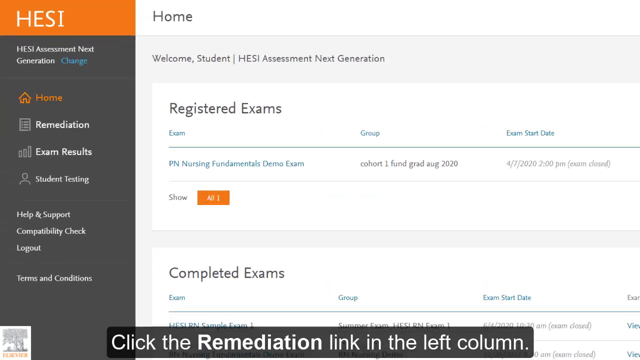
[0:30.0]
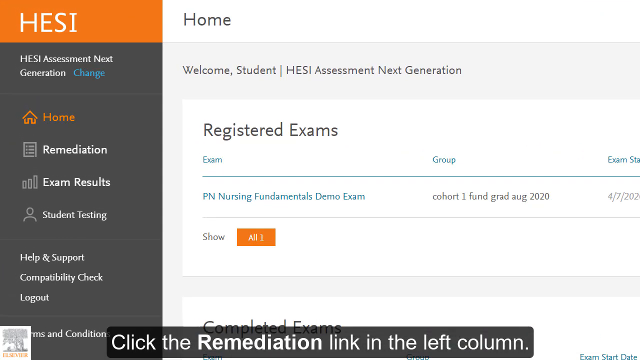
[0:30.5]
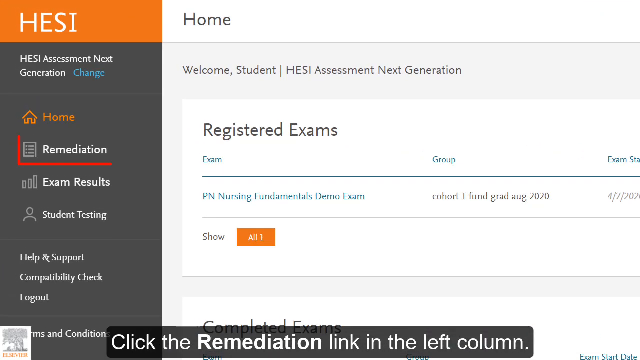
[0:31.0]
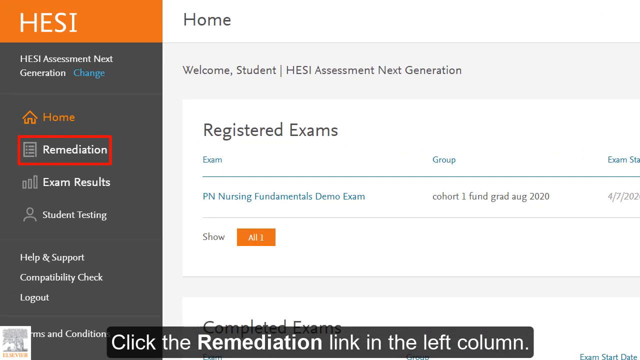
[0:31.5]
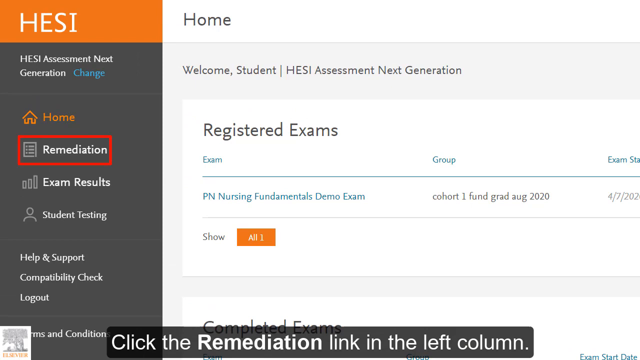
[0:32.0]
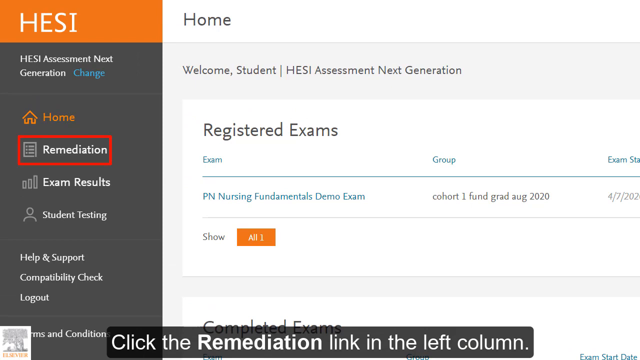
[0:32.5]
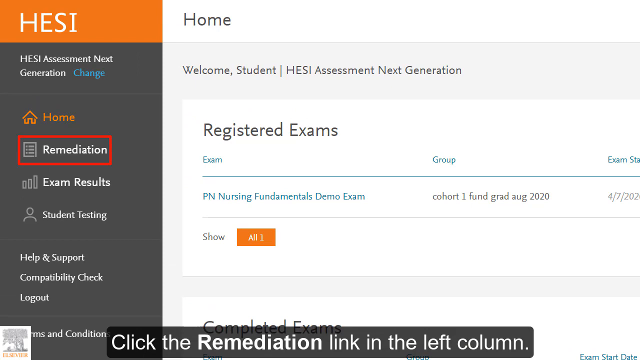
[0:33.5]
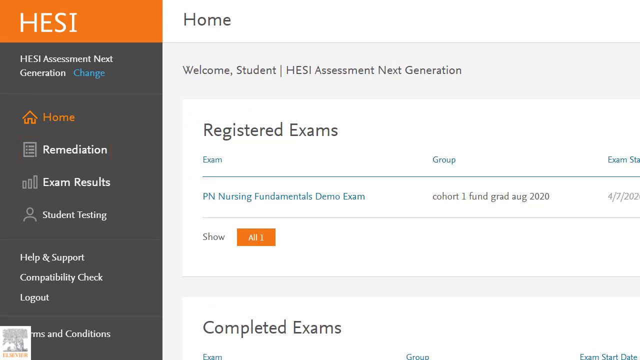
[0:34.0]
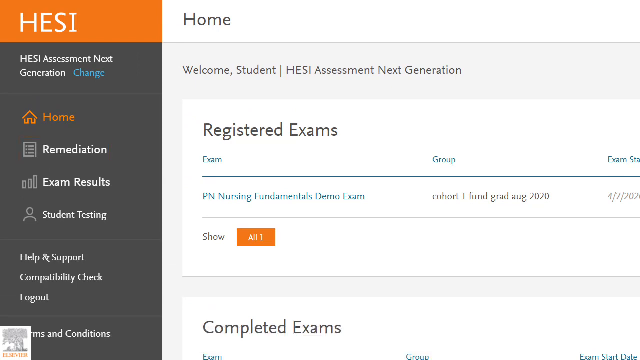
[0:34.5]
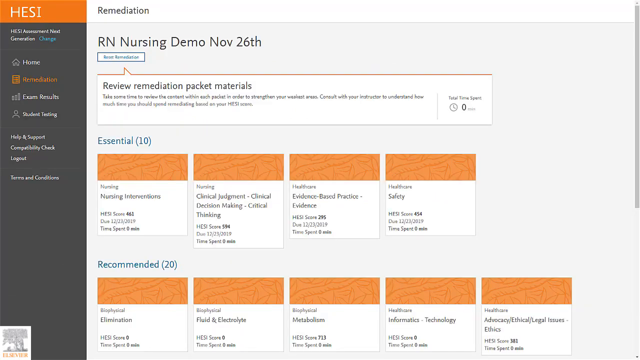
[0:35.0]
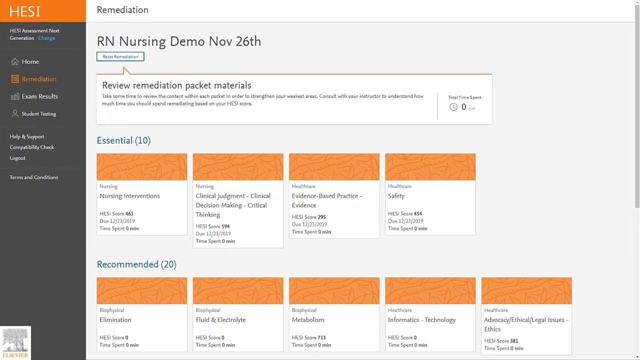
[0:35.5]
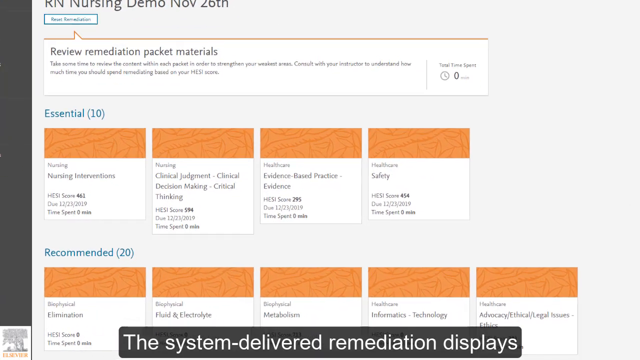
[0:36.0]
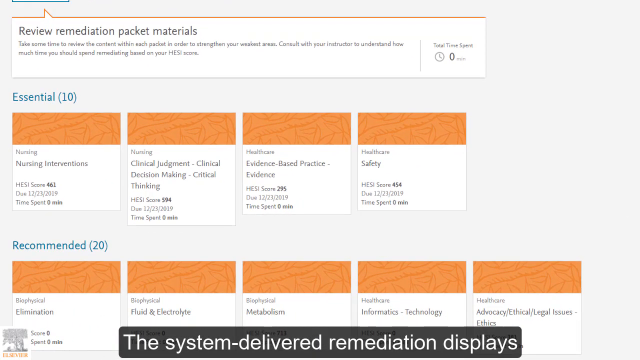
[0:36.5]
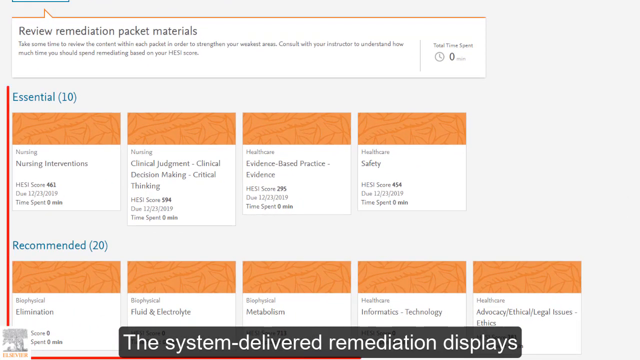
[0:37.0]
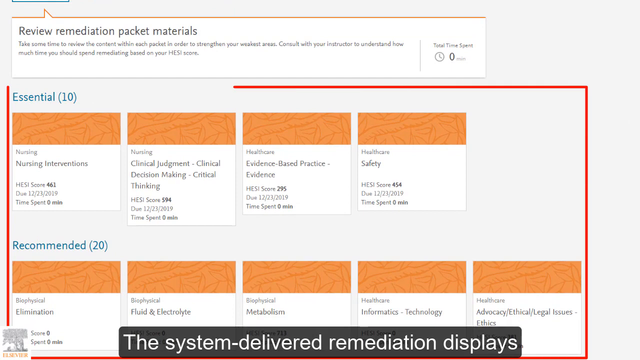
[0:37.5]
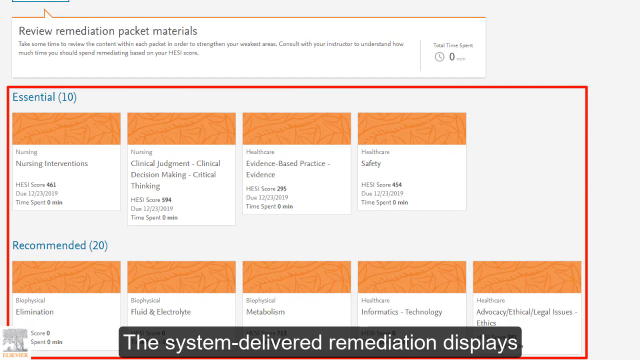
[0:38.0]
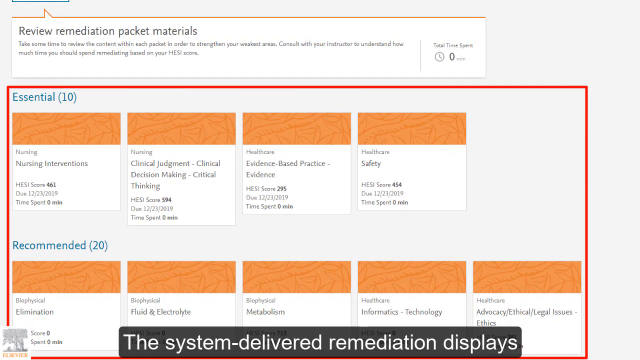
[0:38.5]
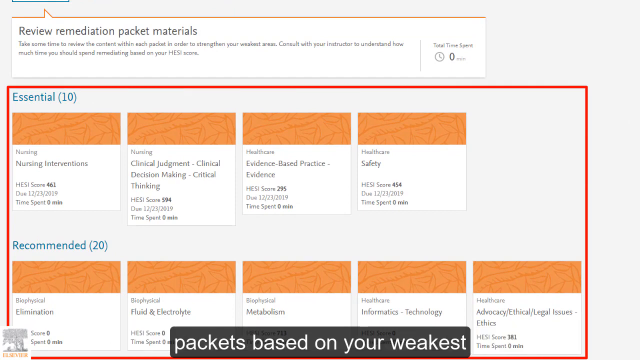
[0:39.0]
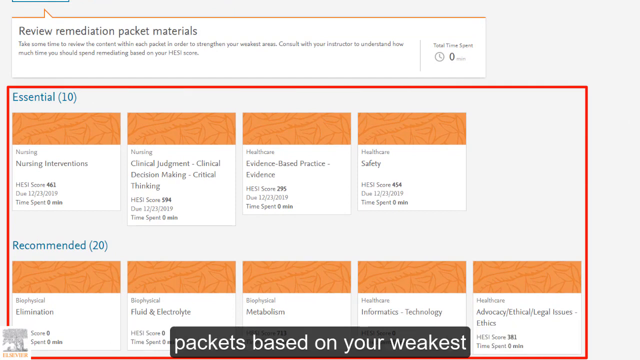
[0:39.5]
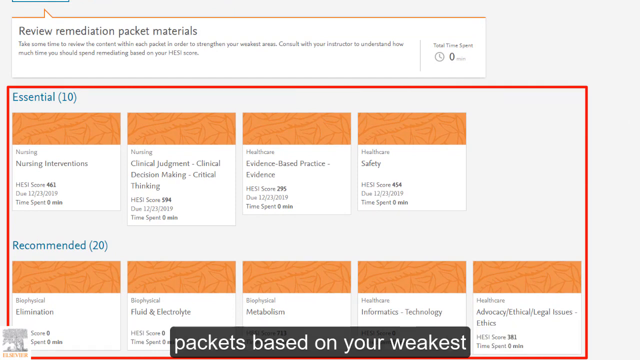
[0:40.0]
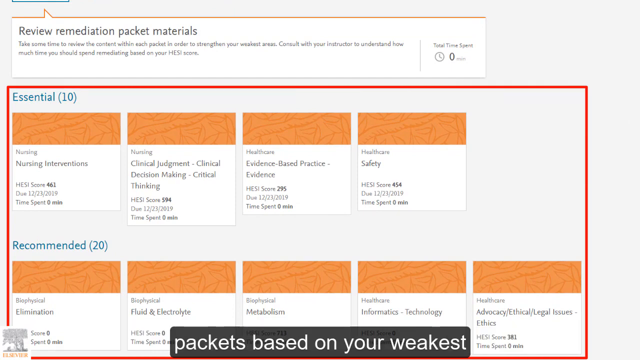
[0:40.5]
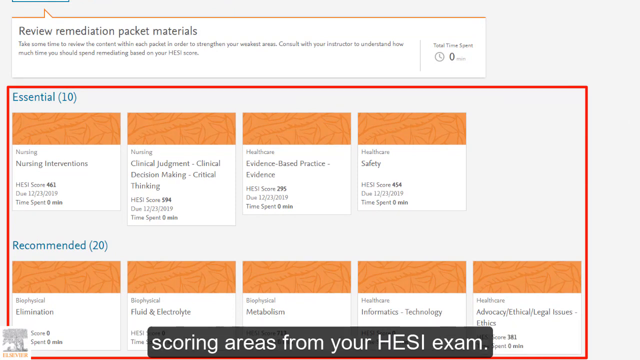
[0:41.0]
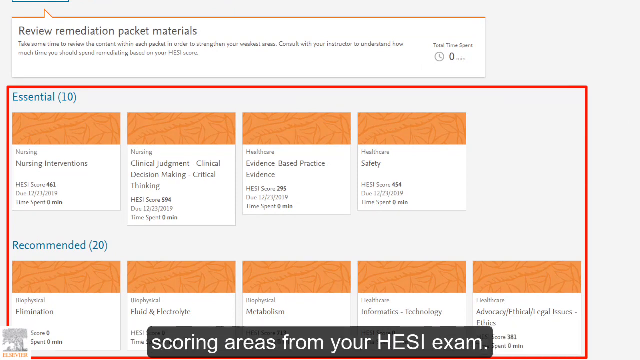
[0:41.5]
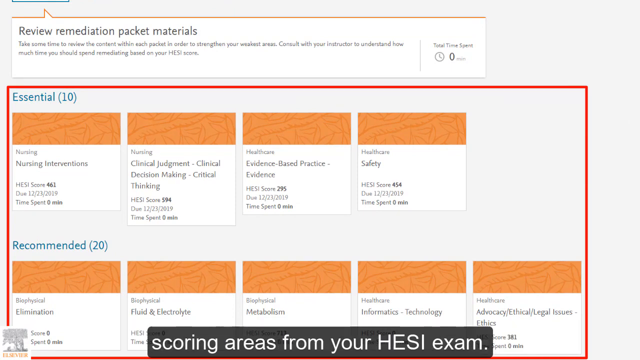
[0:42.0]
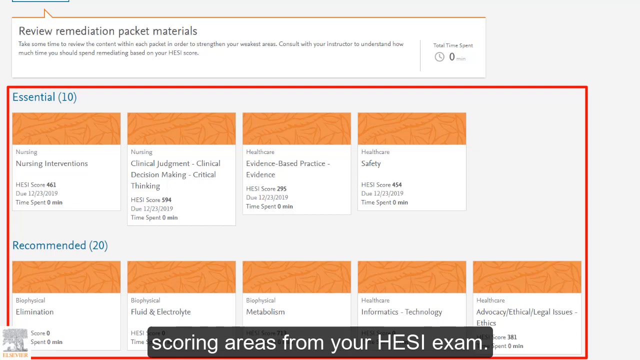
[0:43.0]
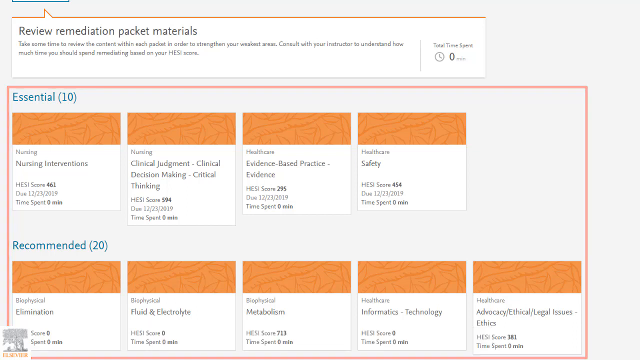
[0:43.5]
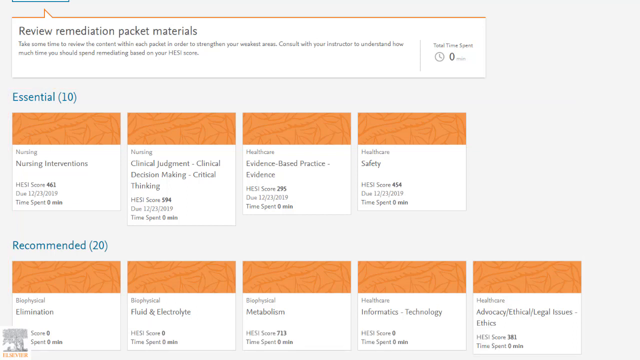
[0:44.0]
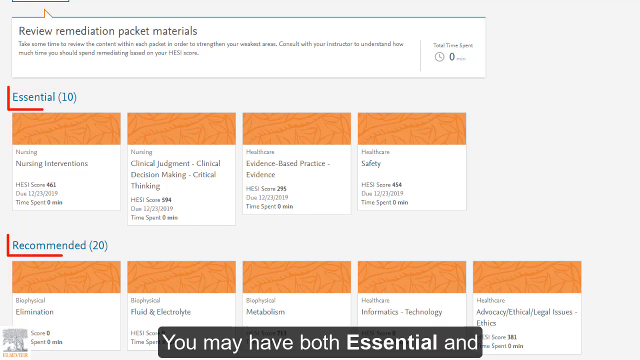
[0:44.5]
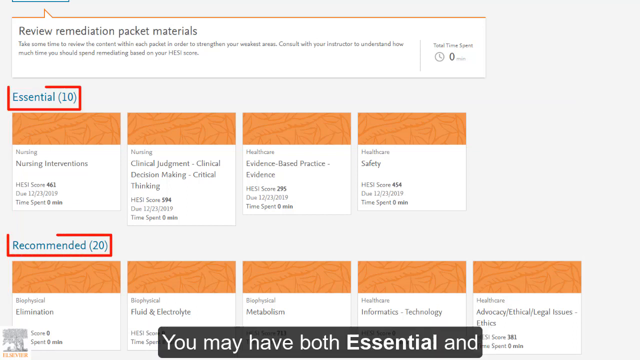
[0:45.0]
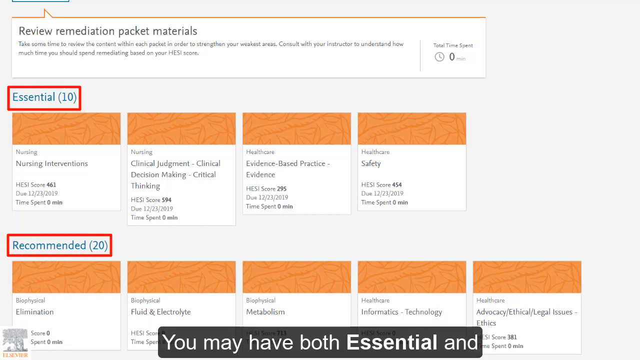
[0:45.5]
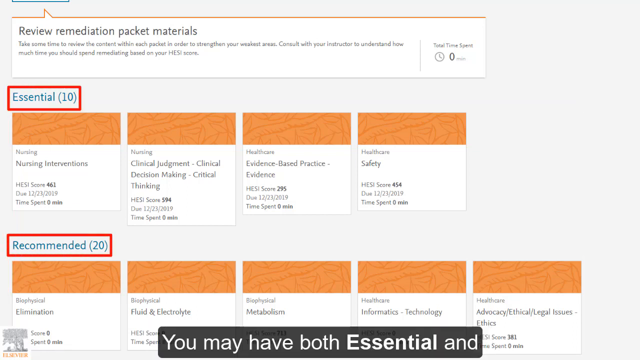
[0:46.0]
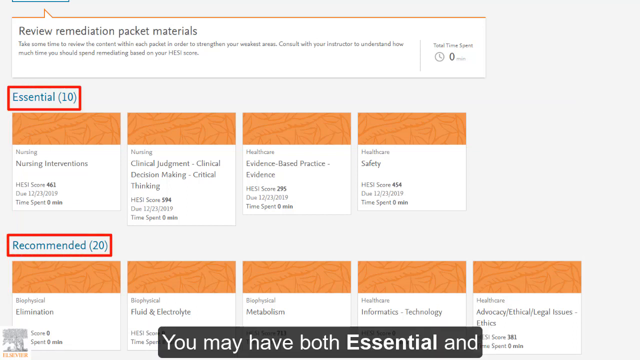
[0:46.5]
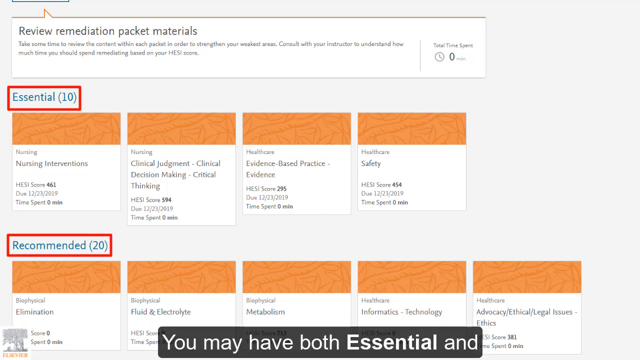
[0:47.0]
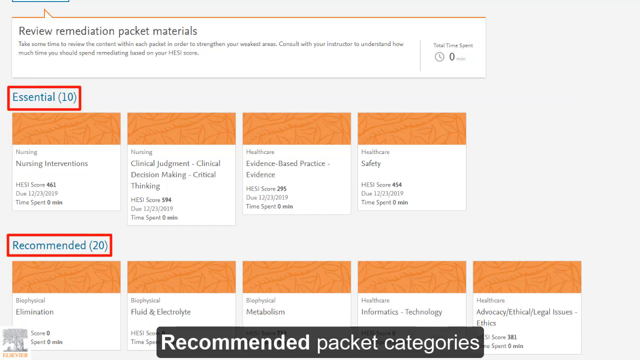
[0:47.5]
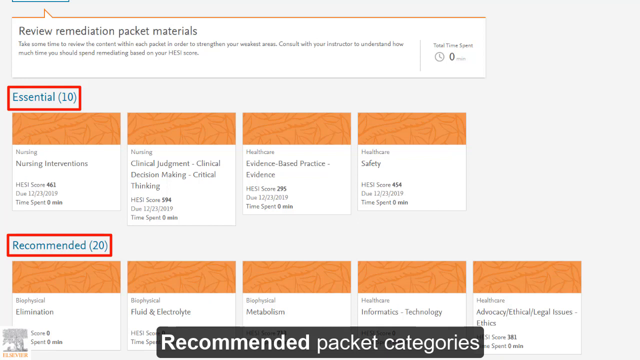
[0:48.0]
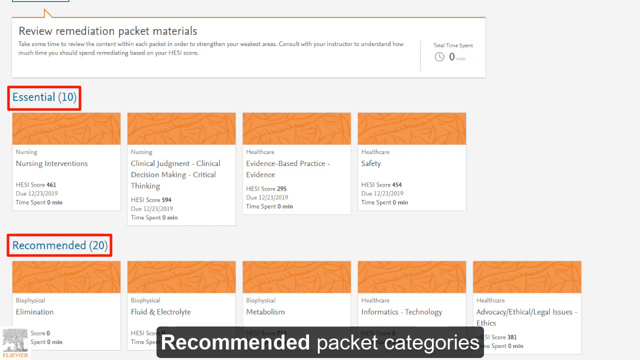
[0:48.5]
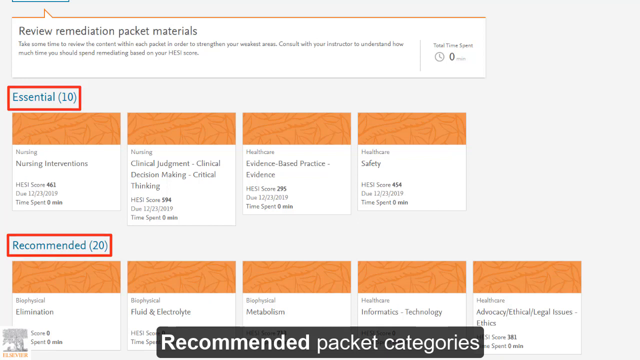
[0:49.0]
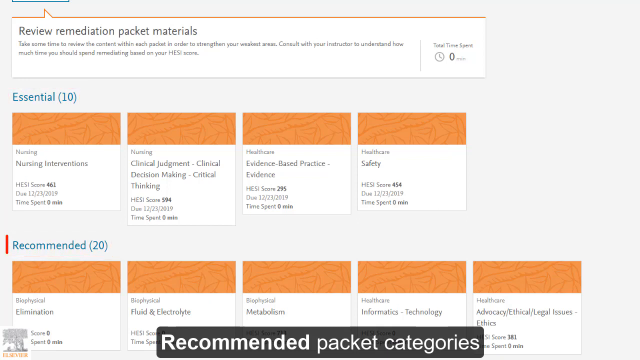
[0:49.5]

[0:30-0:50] The HESI Assessment Next Generation site shows menu items including change, home, remediation, exam results, student testing, help and support, compatibility check, logout, and terms and condition, along with "welcome students," HESI assessment next generation and registered exams. The exam name is "P. N. Nassim Fundamentals Demo exam," the group is "Cohort 1, Fund, Graduate, August 2020," the exam start date is 4th of July, 2020, 2 p.m., and it is marked completed. The page shows the registered exam, its status, its time, other exam information and a remediation link. The next slide reads "review remediation packet materials. Take some time to review the content within each packet in order to strengthen your weakest area. Consult with your instructor to understand how much time you should spend remediating based on your HESI score." Under Essential (10) are nursing interventions, clinical judgment, clinical decision-making, critical thinking, and health care safety. Under Recommended (20) are fluid and electrolytes, elimination, metabolism, health care informatics technology, health care advocacy, and ethical, legal issues.